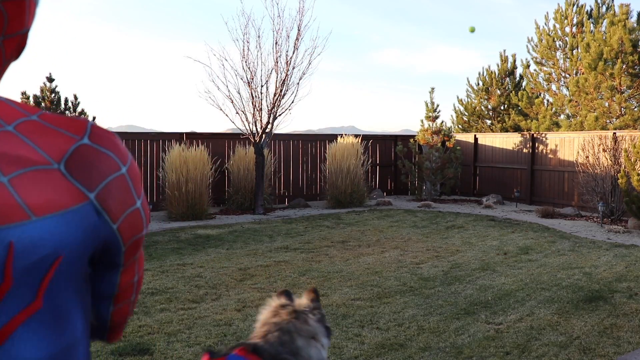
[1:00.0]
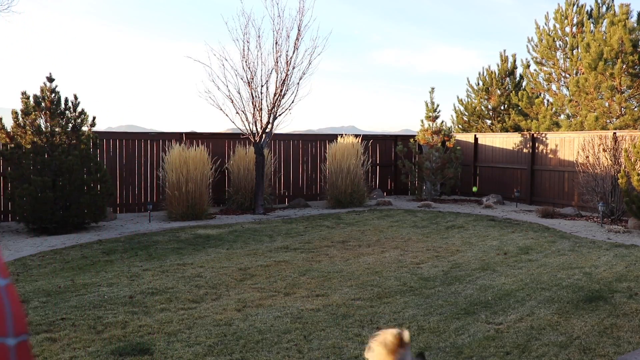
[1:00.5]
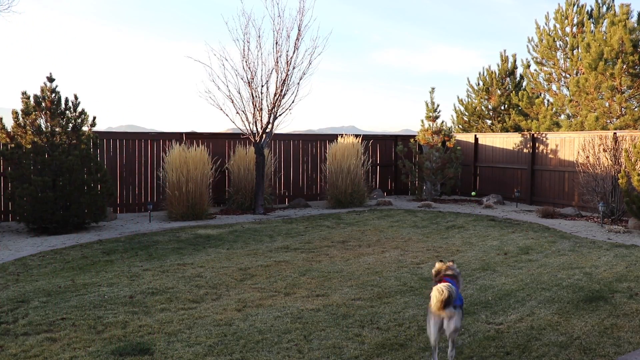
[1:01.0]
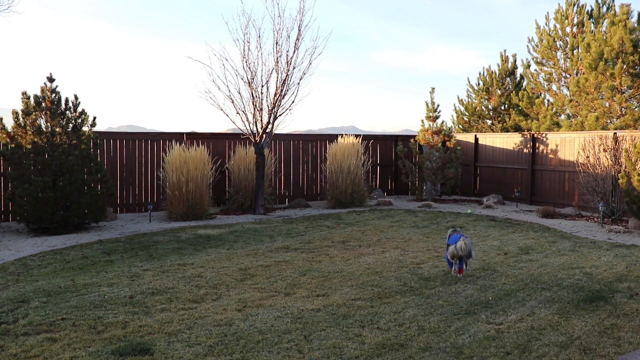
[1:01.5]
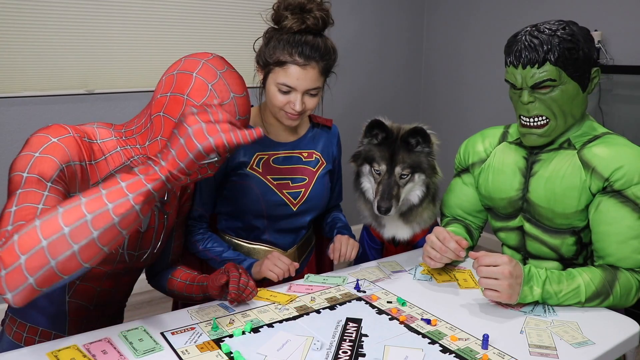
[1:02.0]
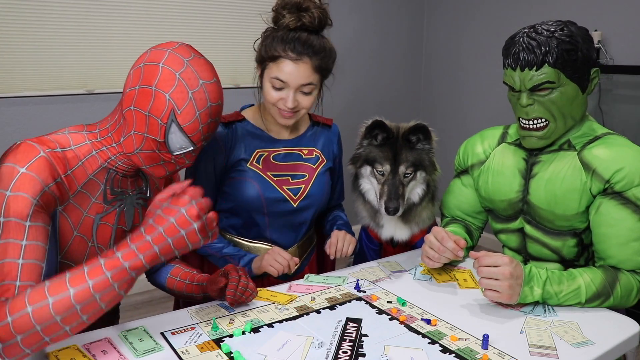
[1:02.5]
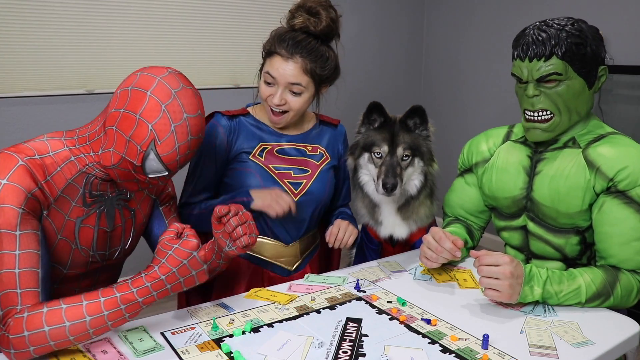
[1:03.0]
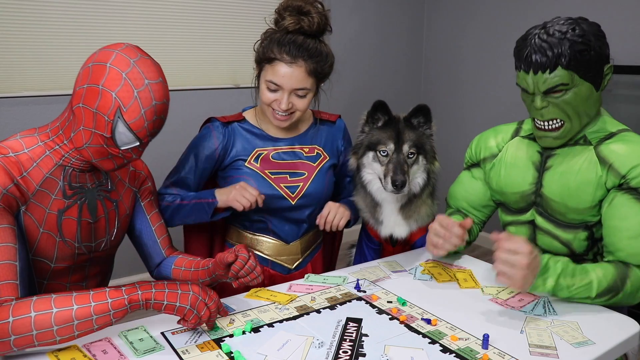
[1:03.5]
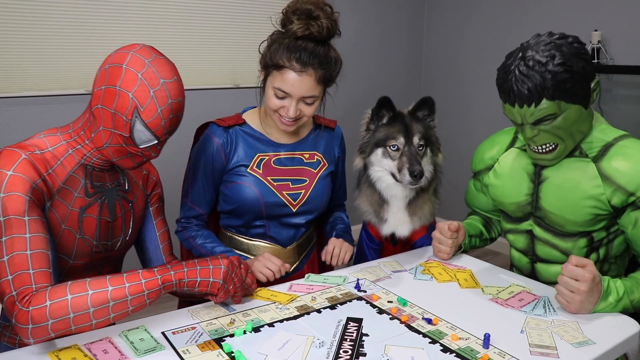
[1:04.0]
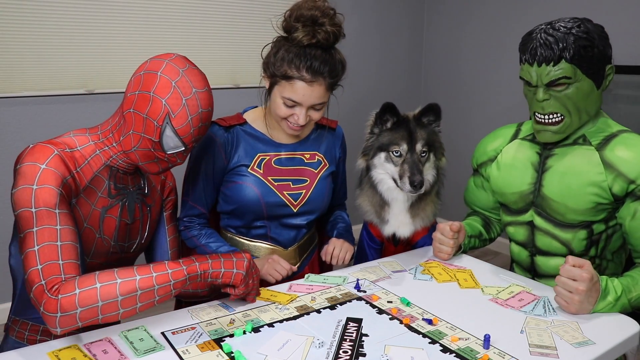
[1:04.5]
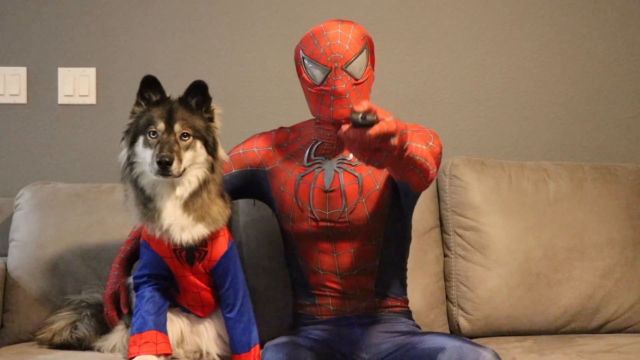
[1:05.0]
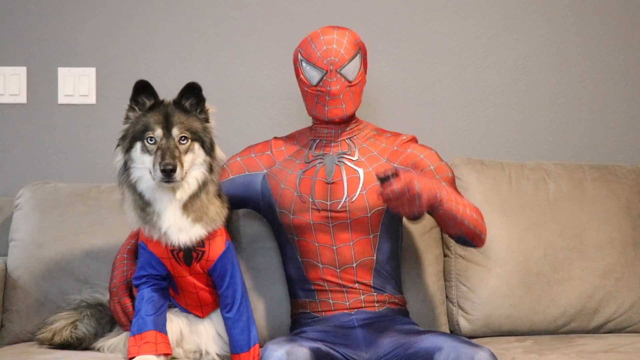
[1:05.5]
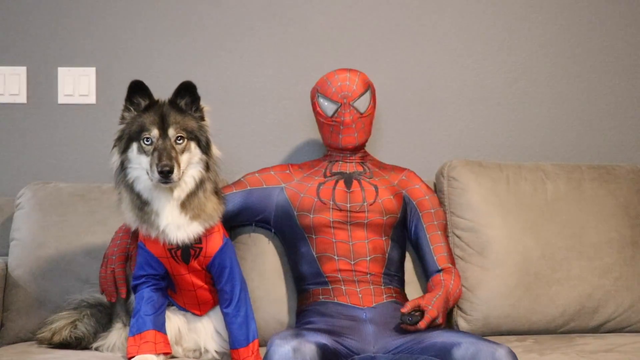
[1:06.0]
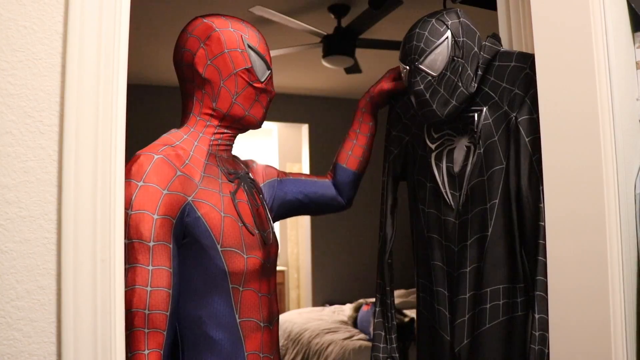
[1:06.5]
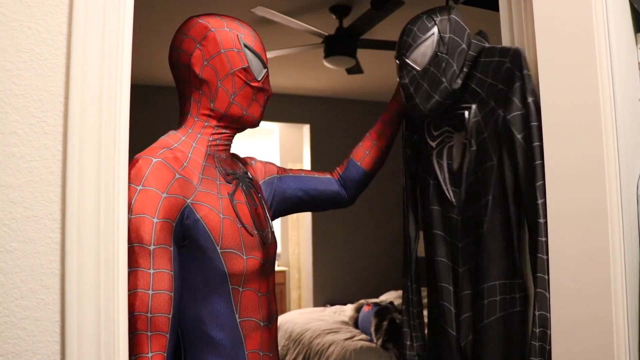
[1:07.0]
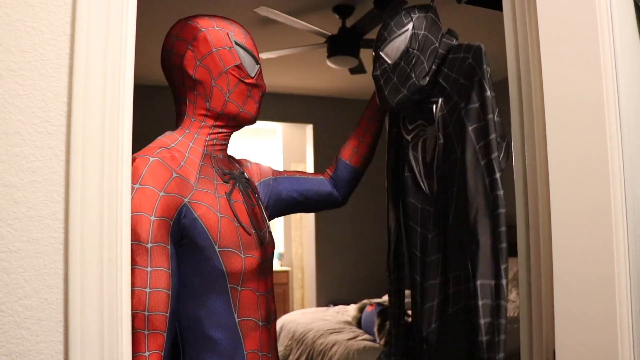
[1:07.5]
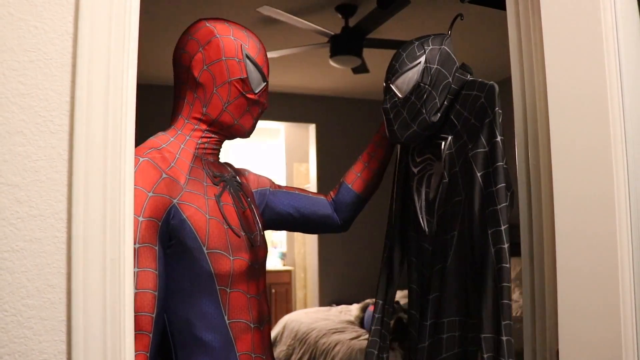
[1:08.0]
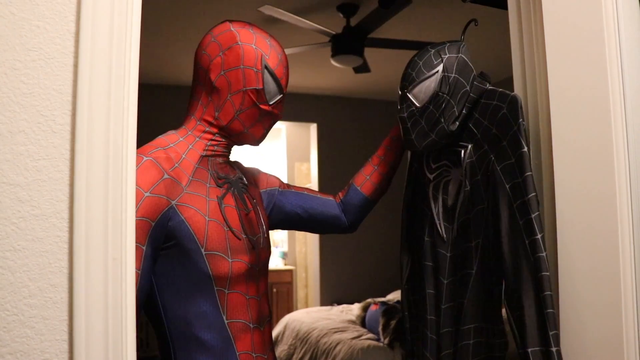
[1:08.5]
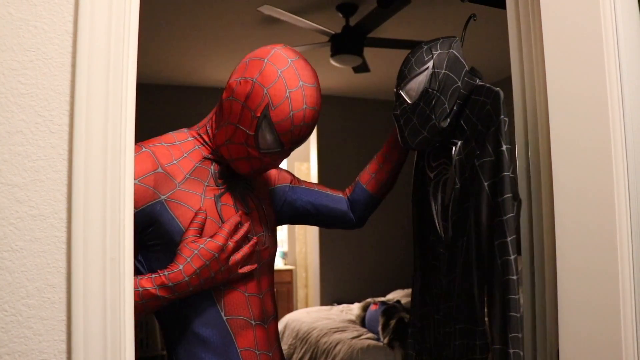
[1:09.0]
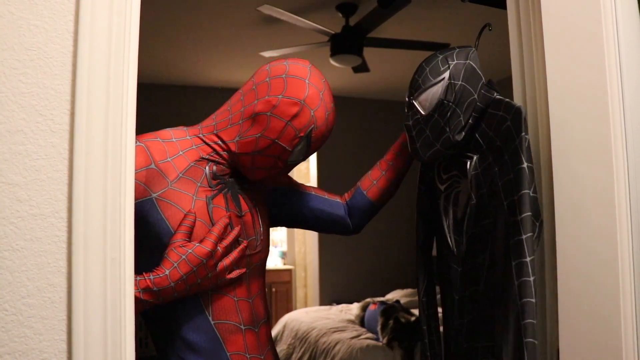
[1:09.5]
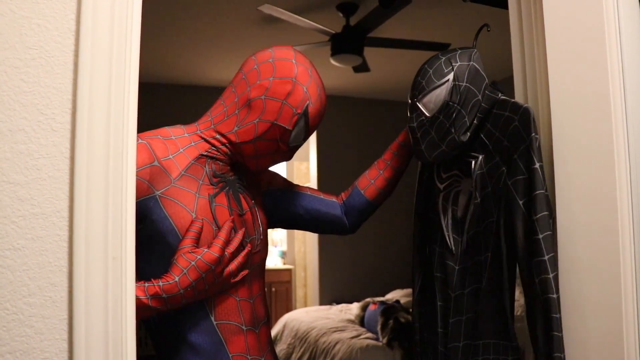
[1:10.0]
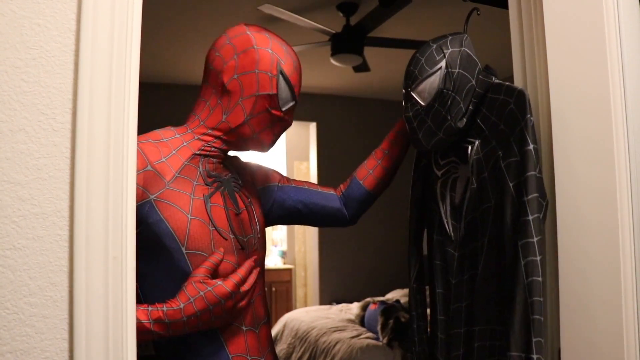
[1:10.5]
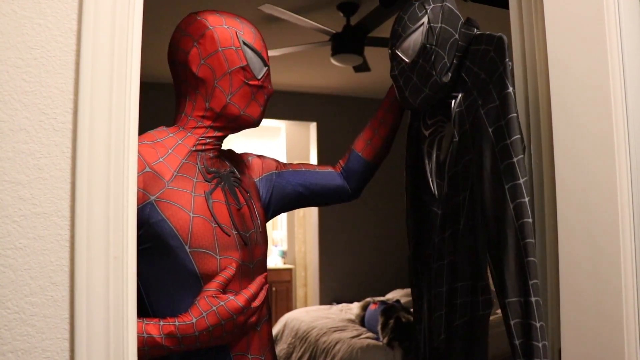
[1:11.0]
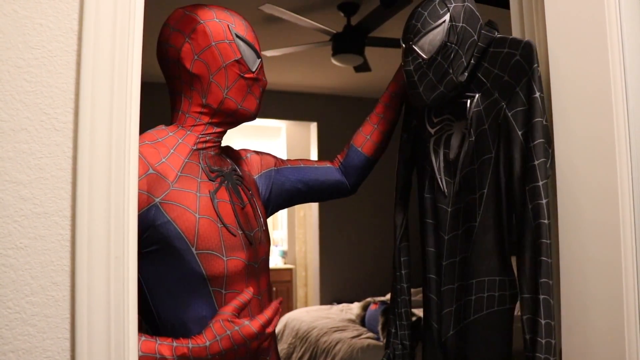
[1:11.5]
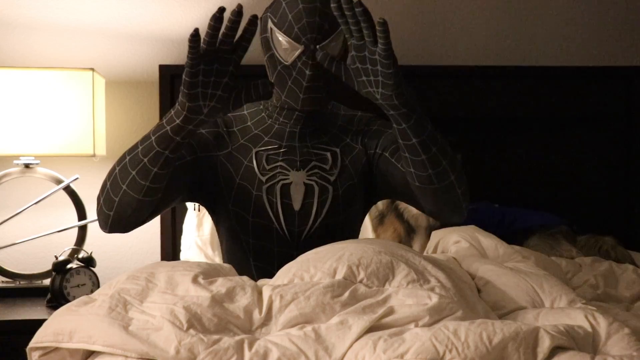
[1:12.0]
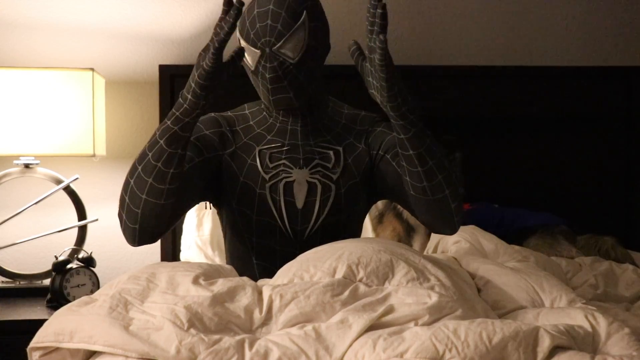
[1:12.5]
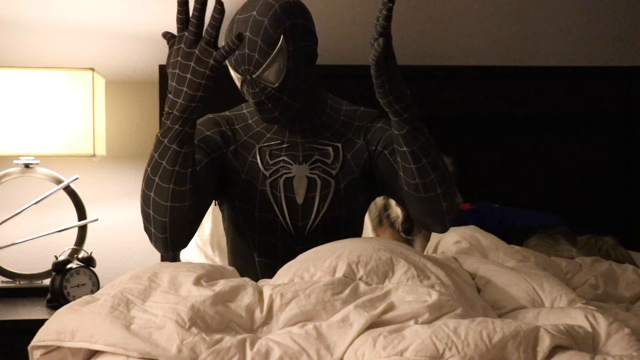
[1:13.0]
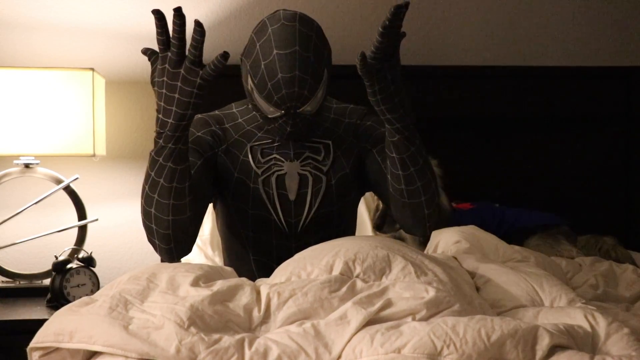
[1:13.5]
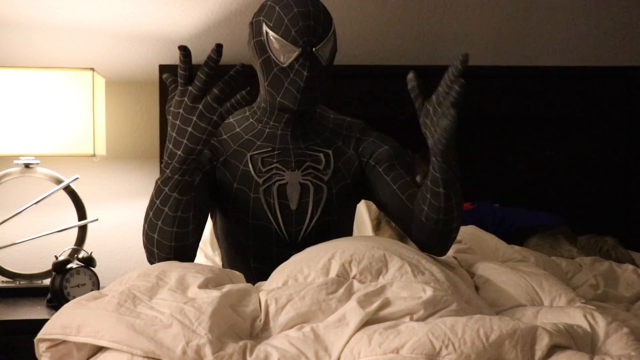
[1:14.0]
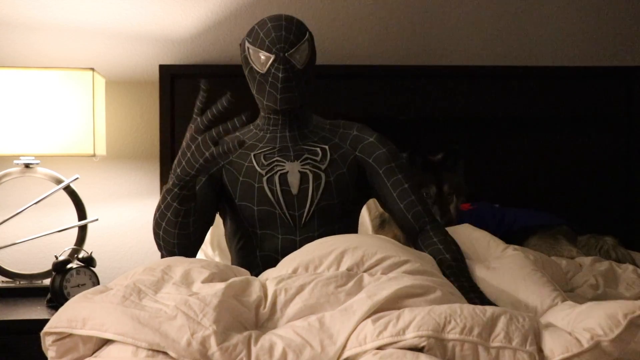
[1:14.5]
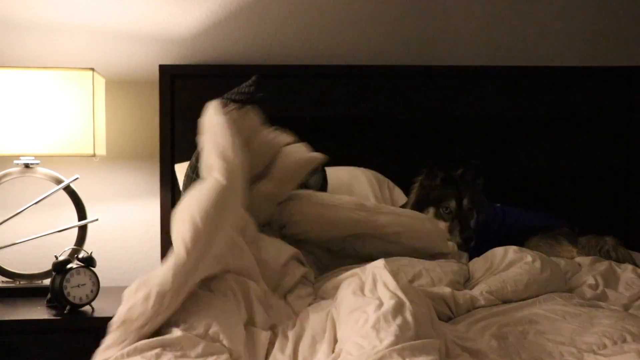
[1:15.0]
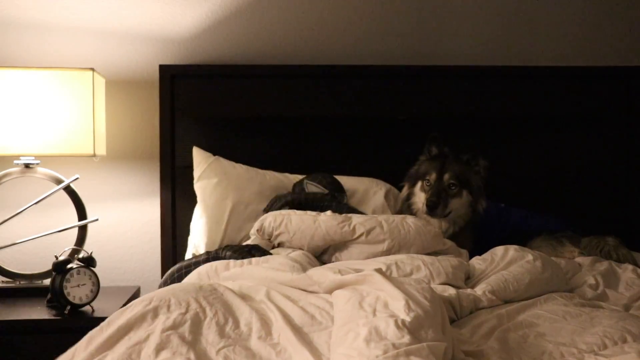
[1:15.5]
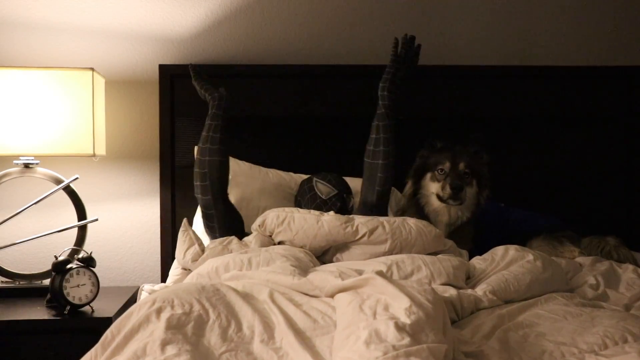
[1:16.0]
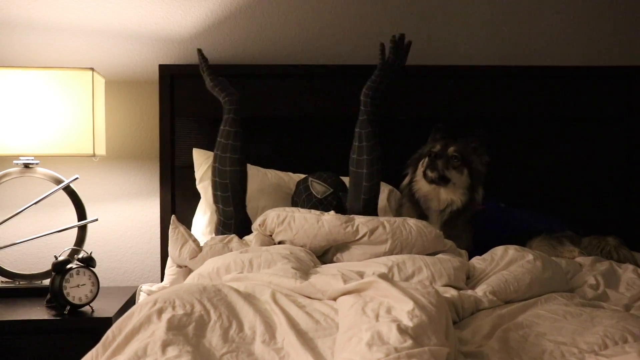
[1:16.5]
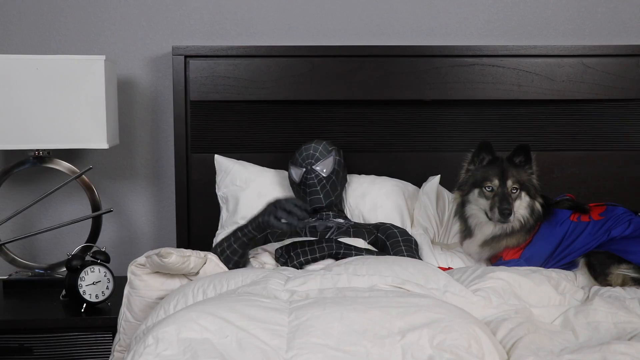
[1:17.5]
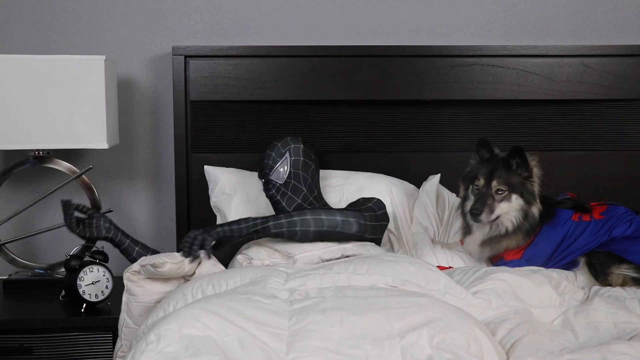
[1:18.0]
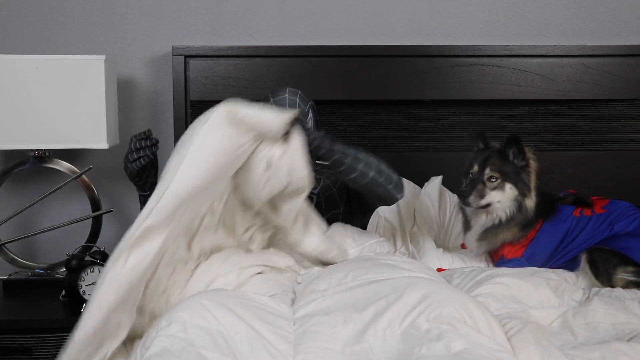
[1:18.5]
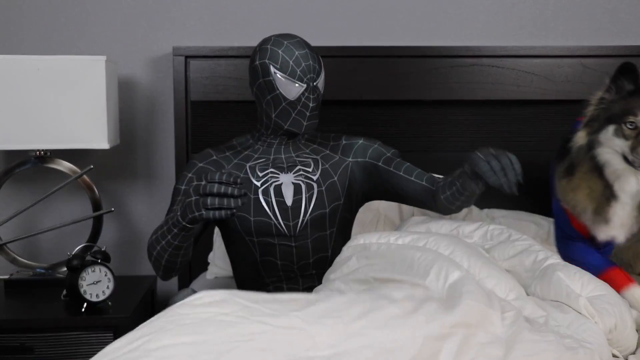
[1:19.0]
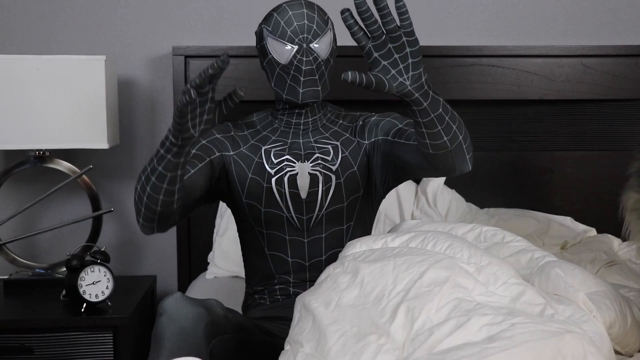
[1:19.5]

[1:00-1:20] Part of the series "The Life of Spider-Dog," the video shows Spider-Man and his dog, dressed in a Spider-Dog uniform, playing a video game or a board game with his friends. He then watches TV, changing channels with the clicker. He looks at a black Spider-Man uniform and changes into it, looks at his hands in it, gets into bed, tucks himself in, and claps to turn out the light. The dog is still wearing the red and blue Spider-Dog uniform. In the morning he gets out of bed, changes into the other costume, his blue and red Spider-Man costume, and goes out to the backyard to throw the ball with Spider-Dog. The dog always stays dressed in red and blue.